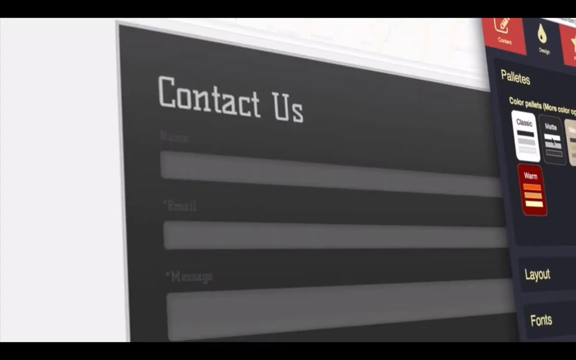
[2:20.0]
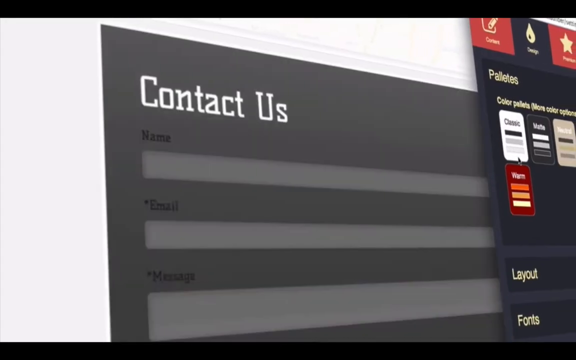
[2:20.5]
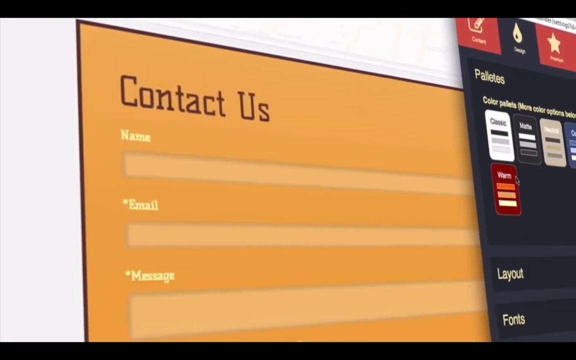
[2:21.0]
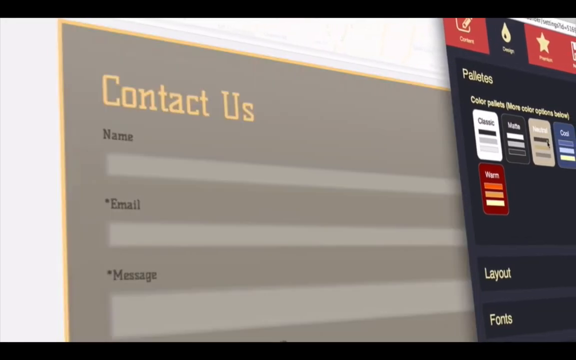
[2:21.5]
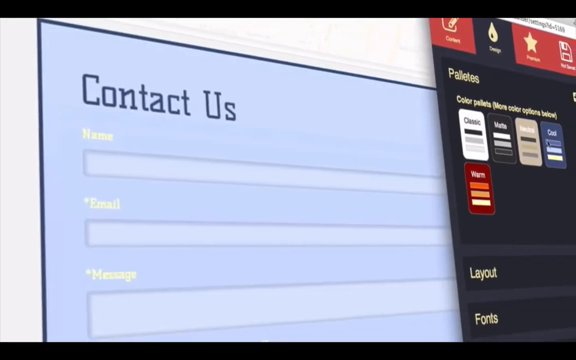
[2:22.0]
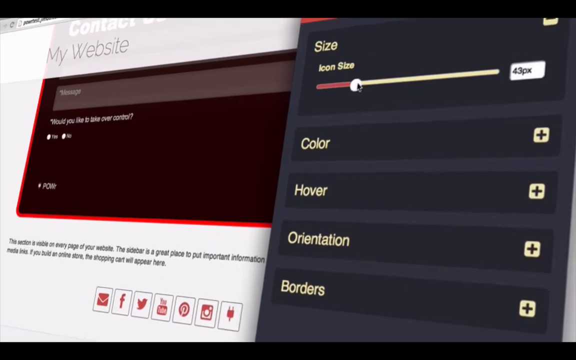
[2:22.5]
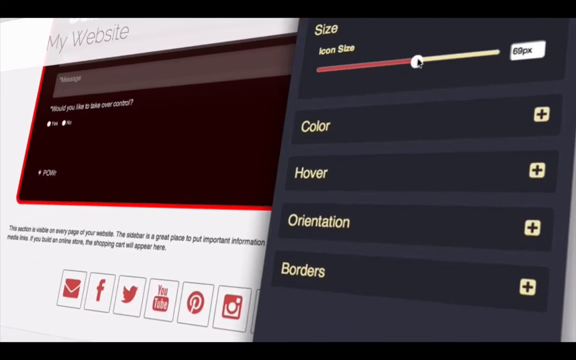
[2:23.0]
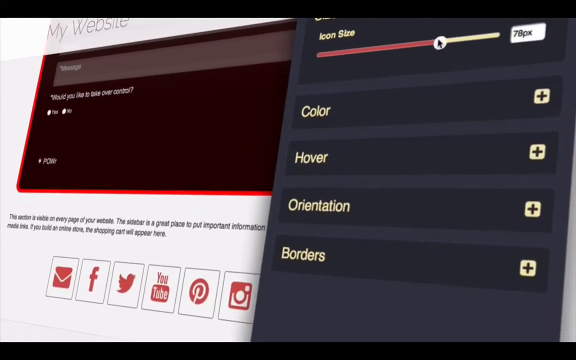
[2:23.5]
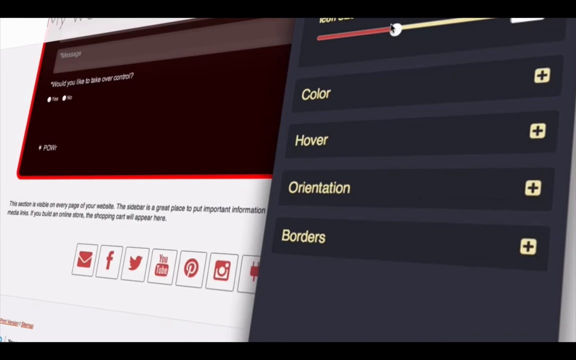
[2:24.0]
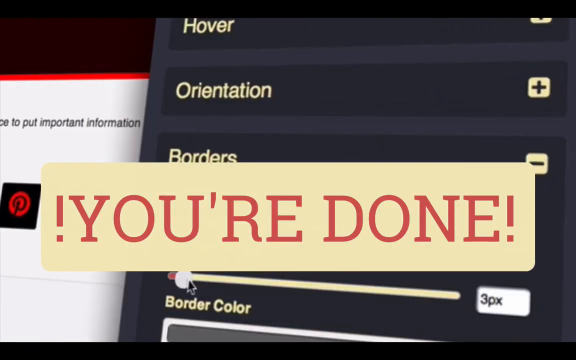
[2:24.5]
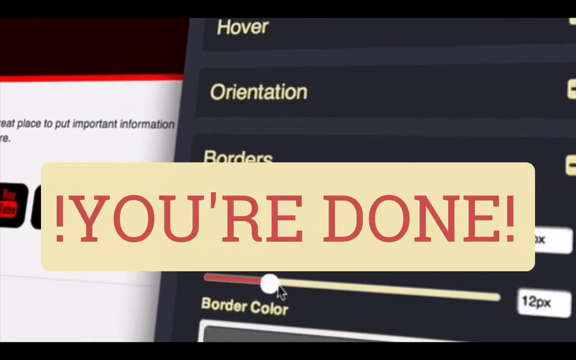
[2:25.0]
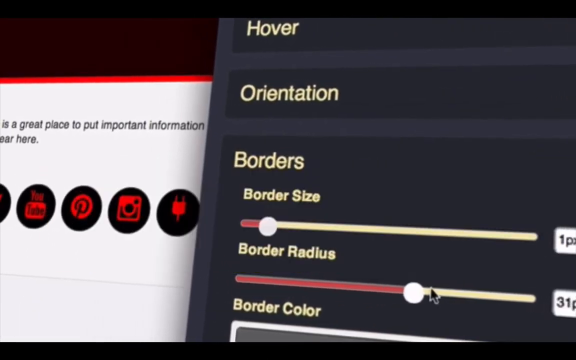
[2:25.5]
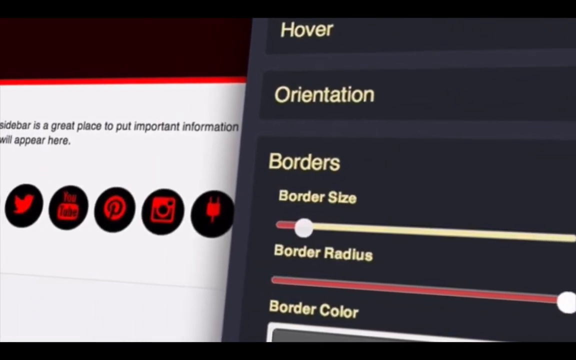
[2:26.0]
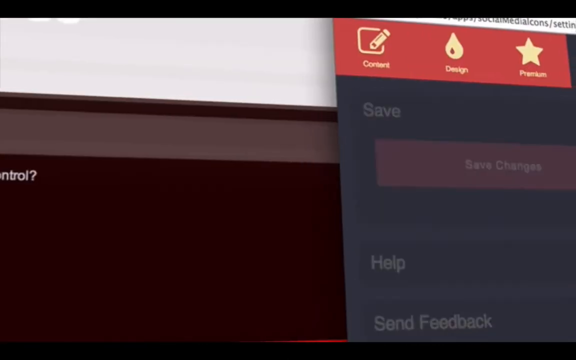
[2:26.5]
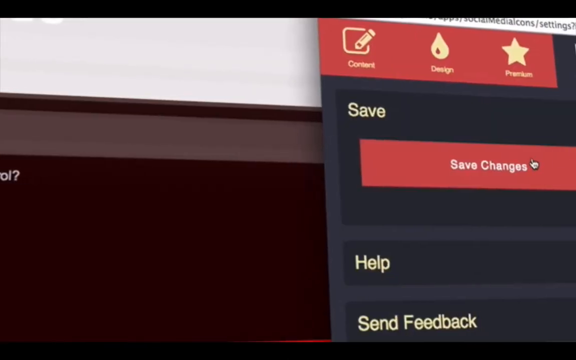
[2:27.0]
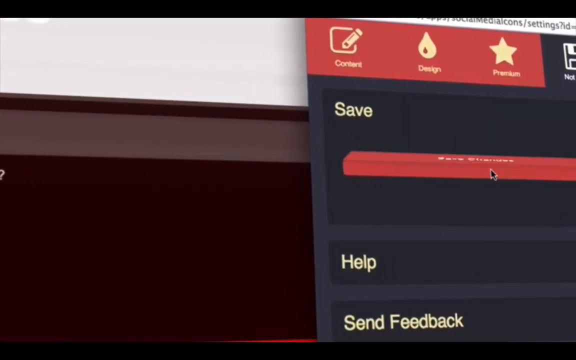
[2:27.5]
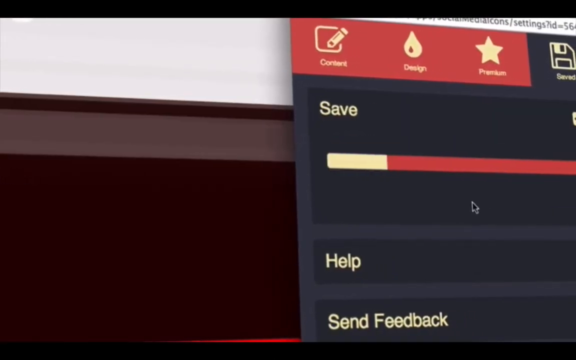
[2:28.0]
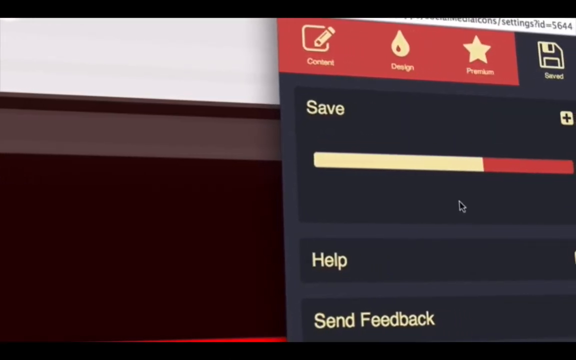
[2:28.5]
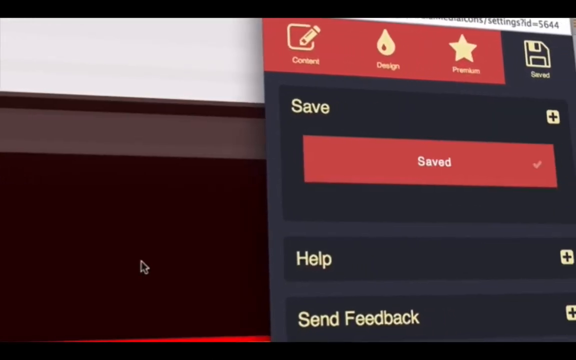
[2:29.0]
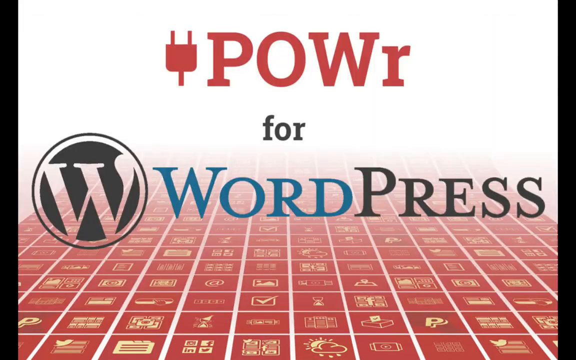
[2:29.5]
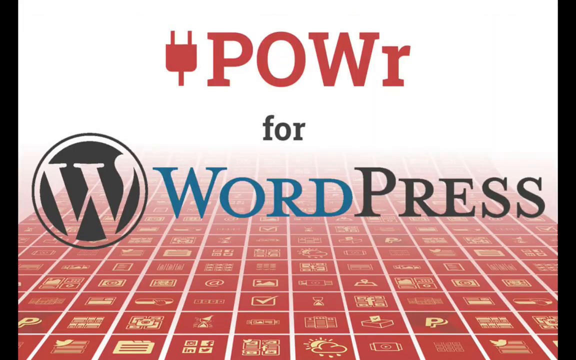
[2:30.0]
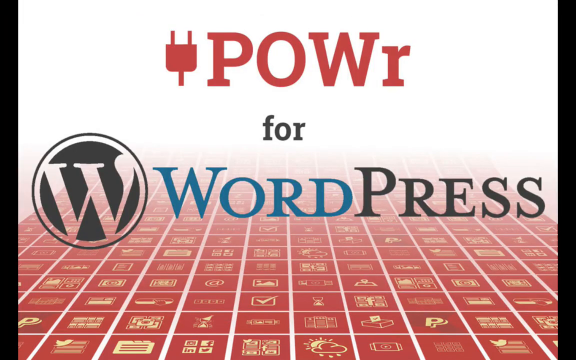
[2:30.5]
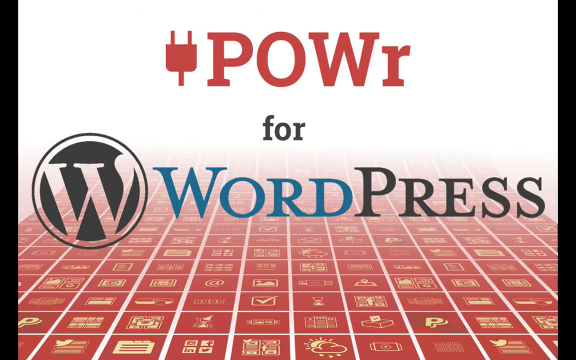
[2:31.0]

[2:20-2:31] A gray box pops up that says "contact us" in white. It then changes colors from orange to yellow to blue, flashing quickly. At the end, a kind of yellowish-beige box pops up on the screen with red print running horizontally that says "!you're done!", with an exclamation point at the beginning and end. Somebody clicks on "save changes", and then it says "saved".